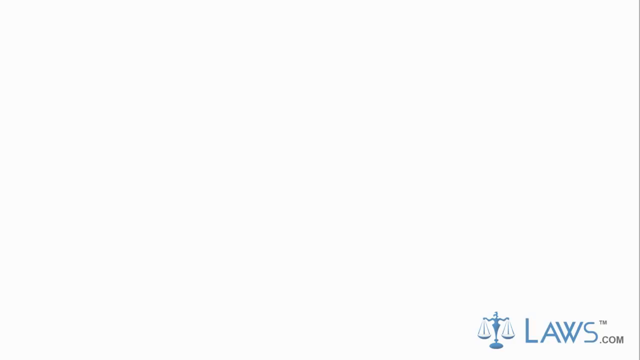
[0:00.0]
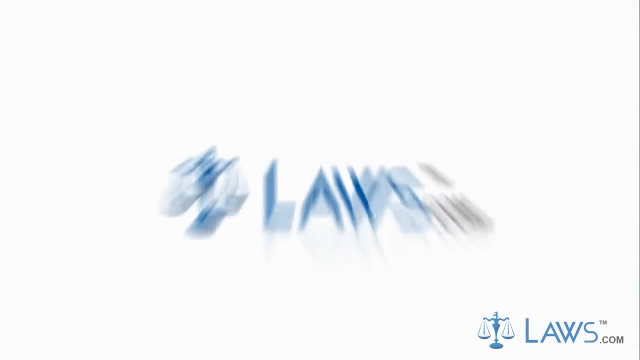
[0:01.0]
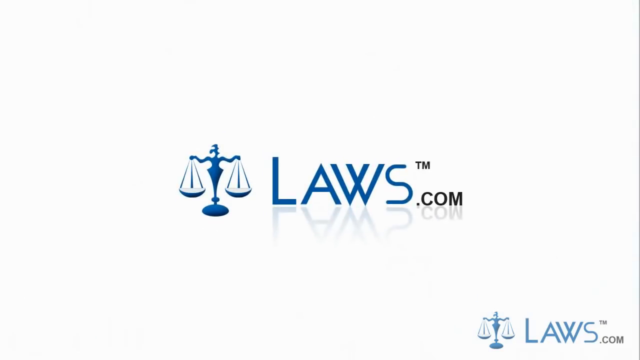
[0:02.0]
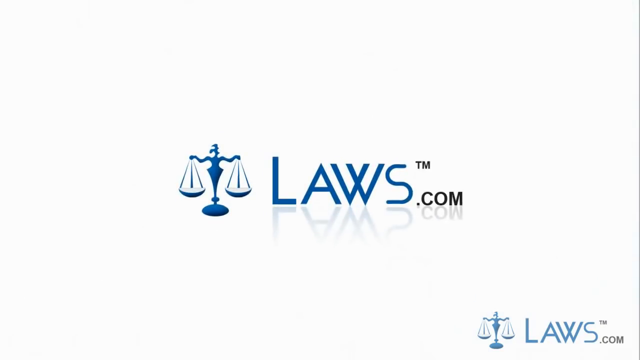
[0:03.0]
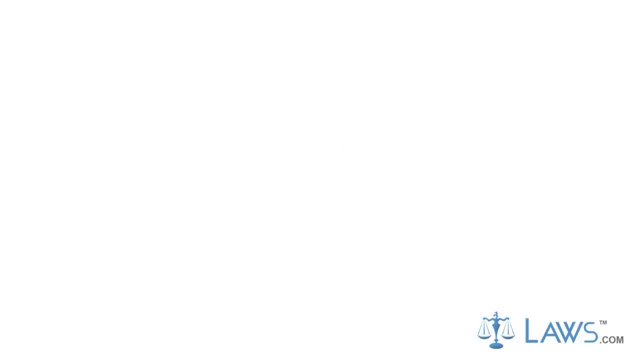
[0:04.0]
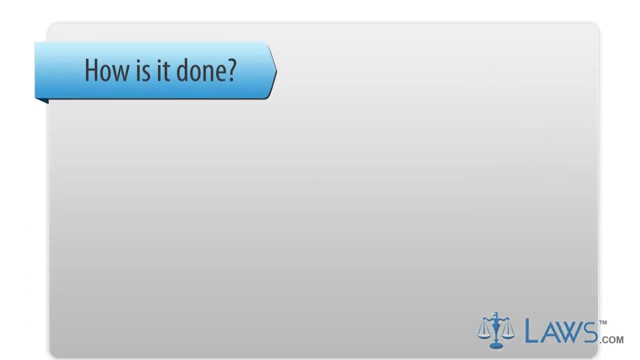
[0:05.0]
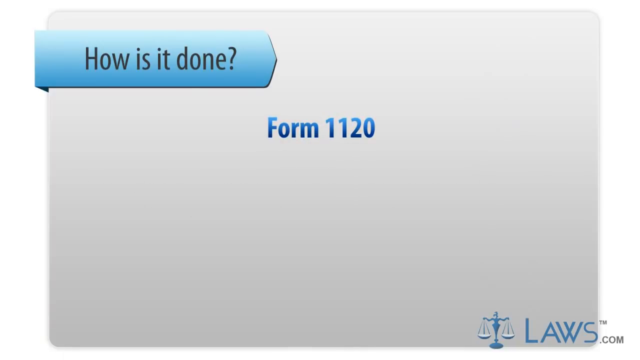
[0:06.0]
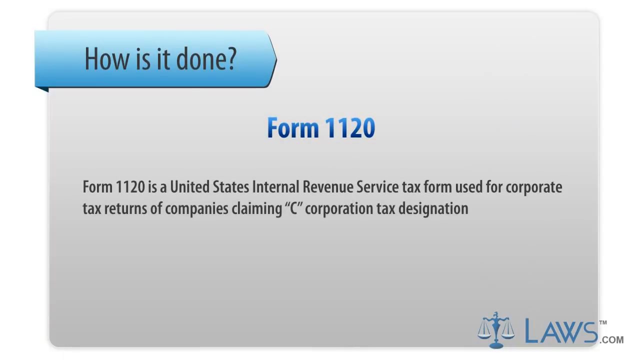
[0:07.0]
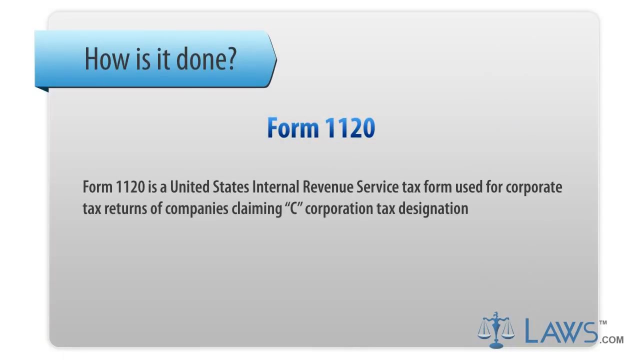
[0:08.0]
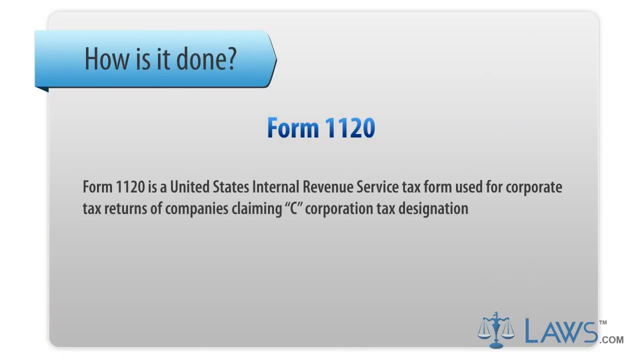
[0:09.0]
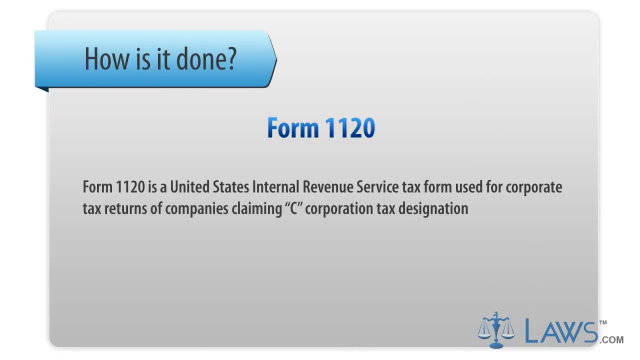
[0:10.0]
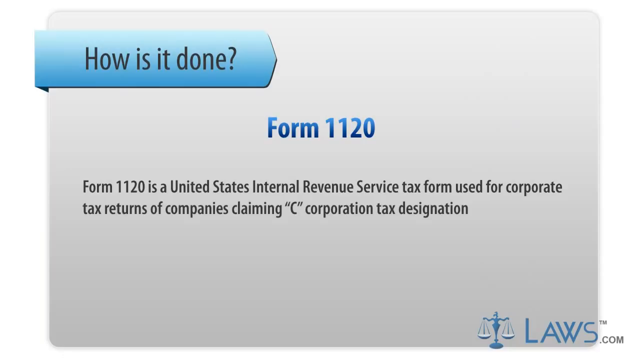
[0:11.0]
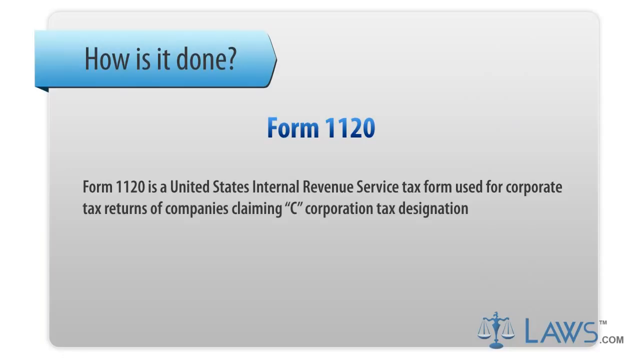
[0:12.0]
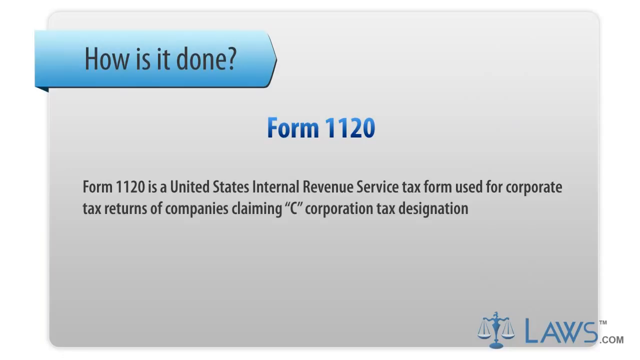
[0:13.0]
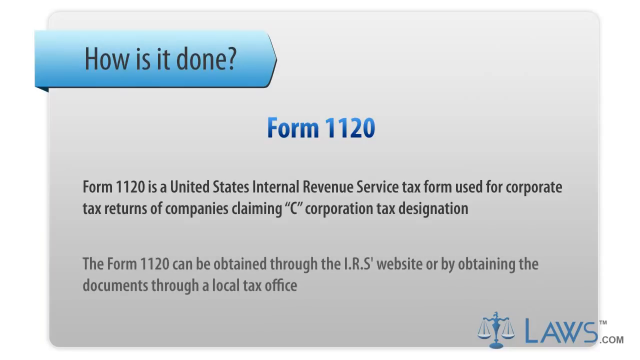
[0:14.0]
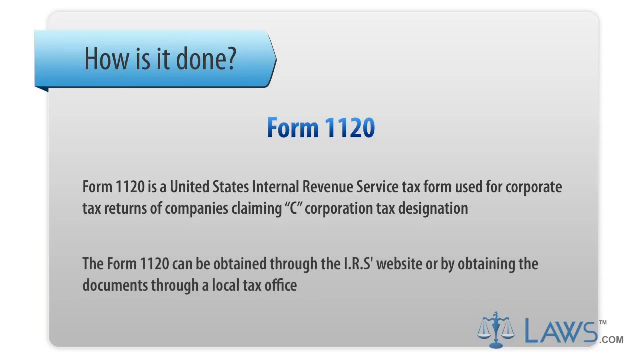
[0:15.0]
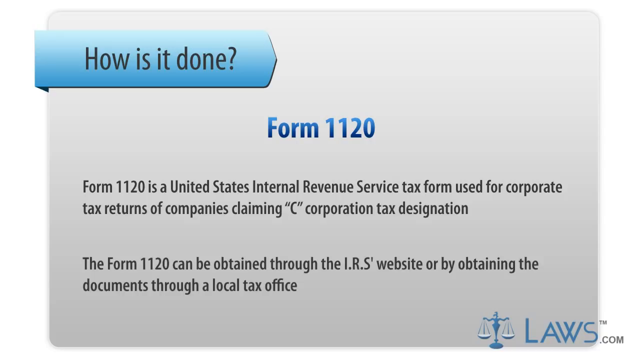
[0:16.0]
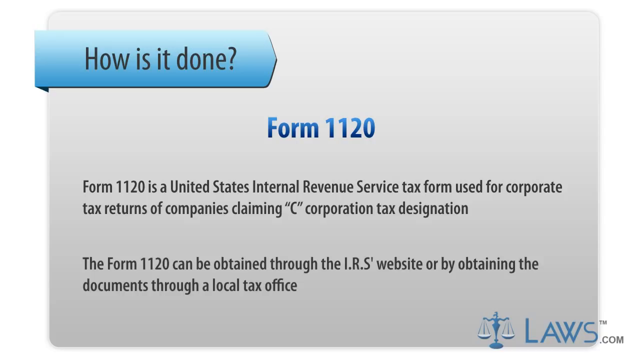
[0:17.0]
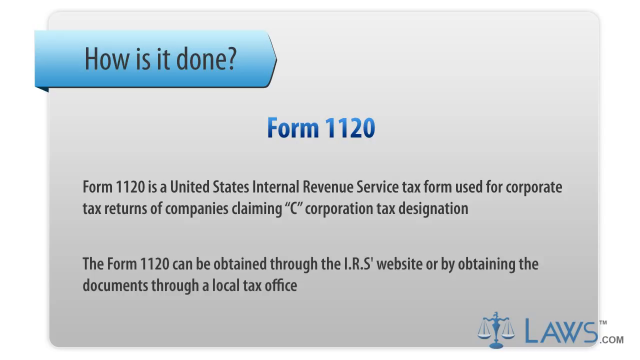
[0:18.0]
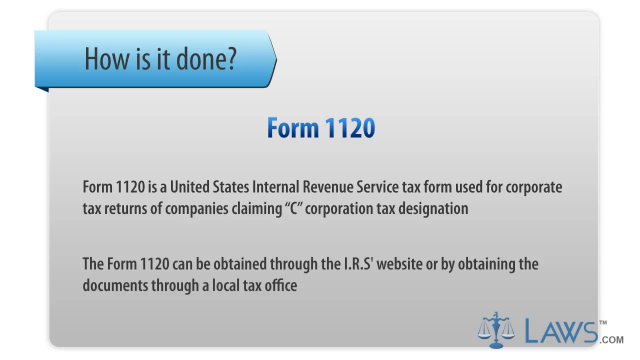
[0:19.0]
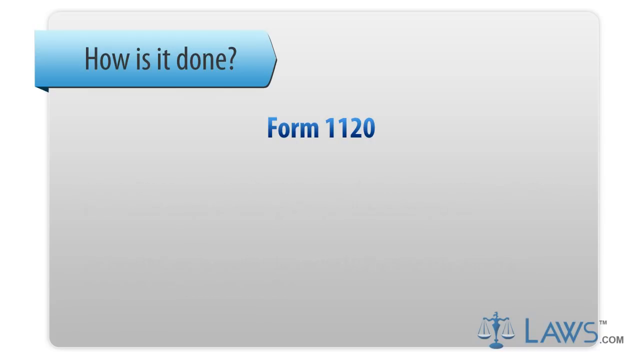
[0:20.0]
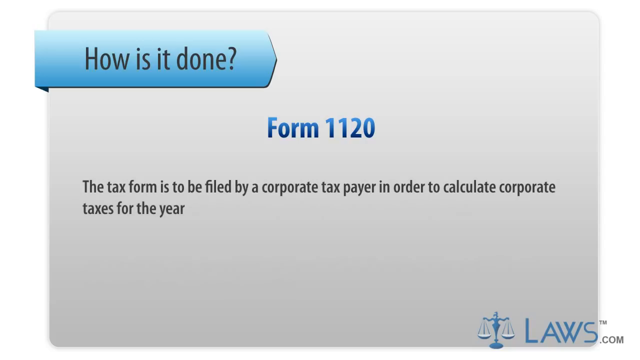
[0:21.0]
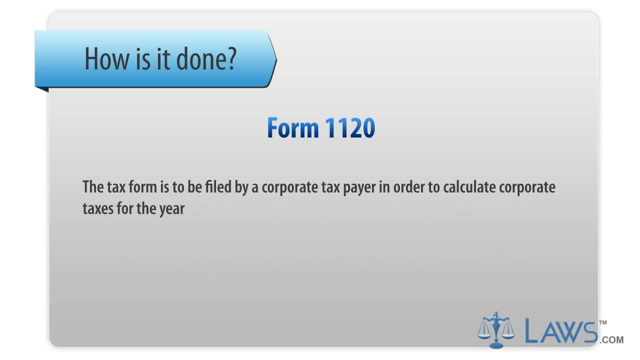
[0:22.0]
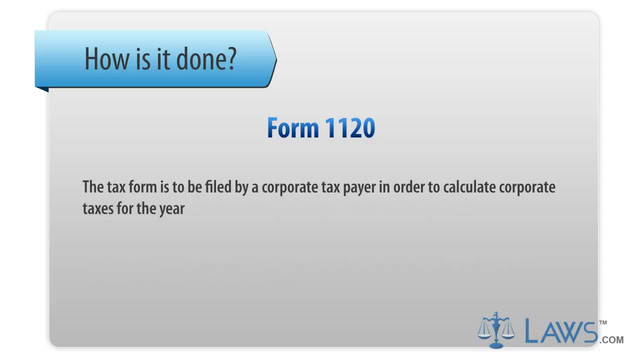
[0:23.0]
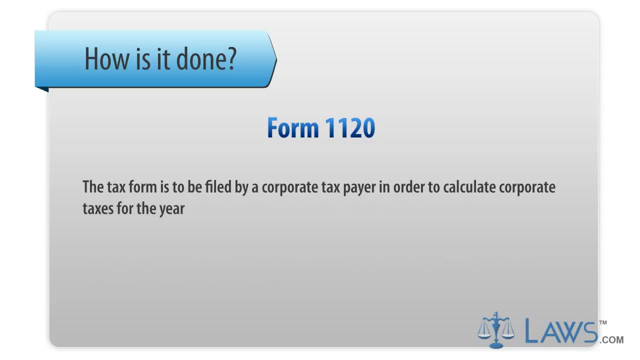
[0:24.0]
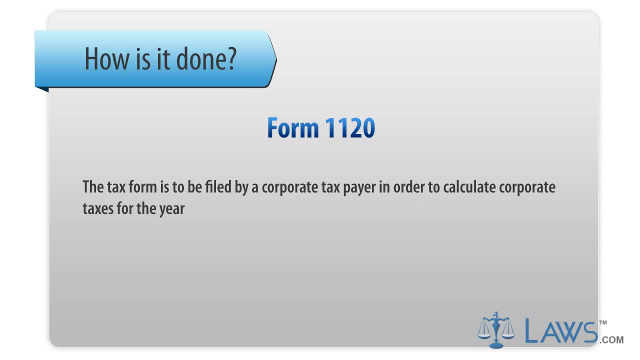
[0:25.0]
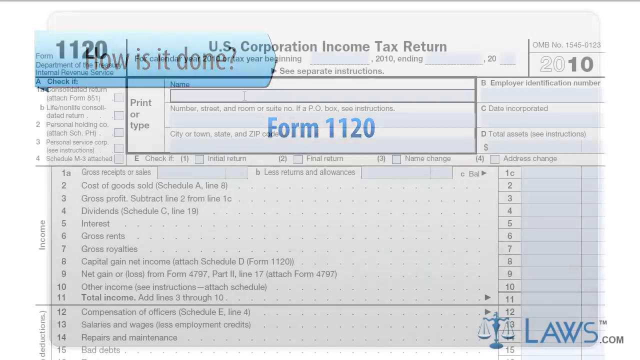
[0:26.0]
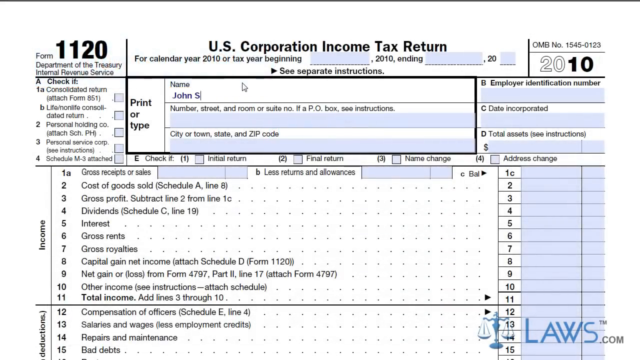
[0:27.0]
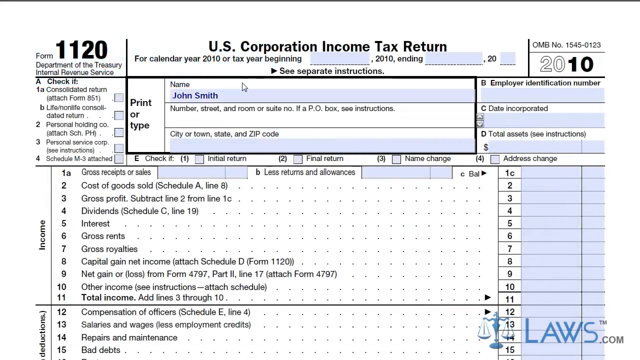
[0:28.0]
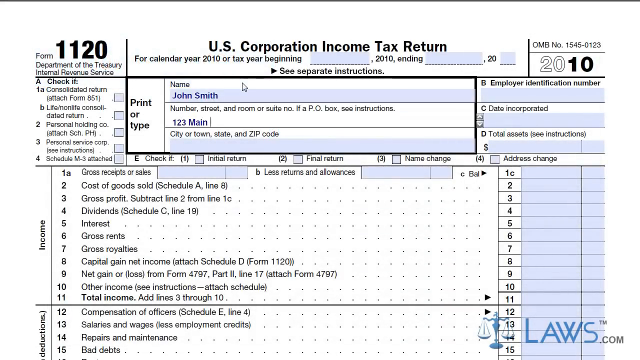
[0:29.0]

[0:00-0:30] A PowerPoint presentation by Laws.com opens on a slide with the label "how is it done" in the top left corner of the screen, in a blue ribbon-like banner. In the middle, "form 1120" appears in blue, bold block print, and below it the text reads "form 1120 is a United States Internal Revenue Service tax form used for corporate tax returns of companies claiming C corporation tax designation. The form 1120 can be obtained through the IRS website or by obtaining the documents." The next screen says "the tax form is to be filed by a corporate taxpayer in order to calculate corporate taxes for the year." The presentation then moves to the actual tax form. In its top left corner is the label "form 1120" in big black bold letters, with "Department of the Treasury Internal Revenue Service" in small writing below it. In the middle of the form is "U.S. Corporation Income Tax Return," and right under that it says "for calendar year 2010 or tax year beginning," followed by a blue blank box, ", 2010," then ", ending," another blue blank box, ", 20," and a third blue blank box.